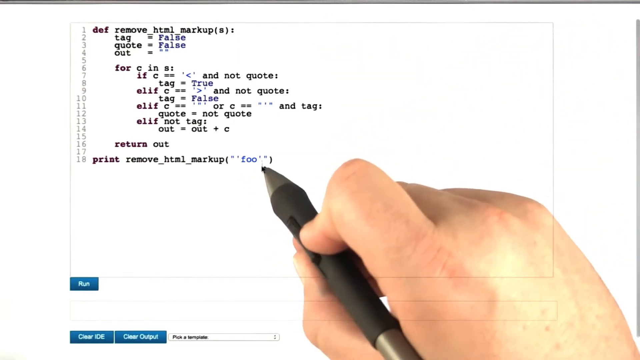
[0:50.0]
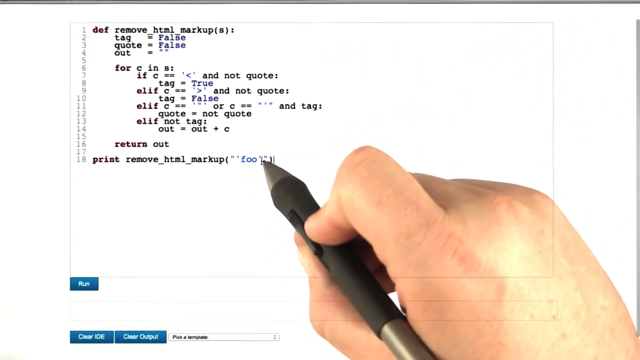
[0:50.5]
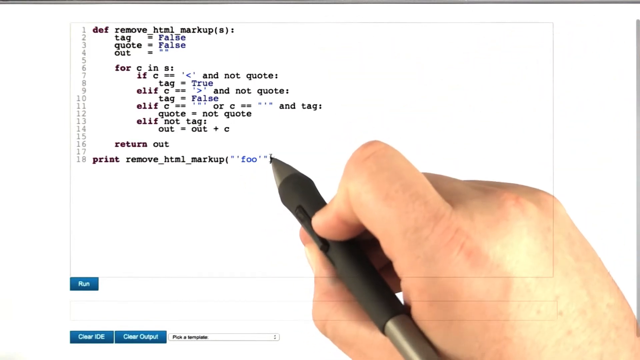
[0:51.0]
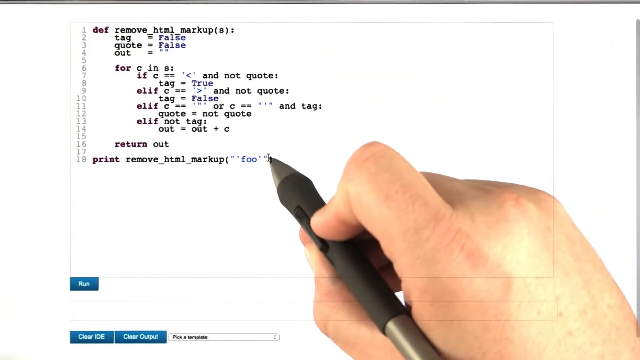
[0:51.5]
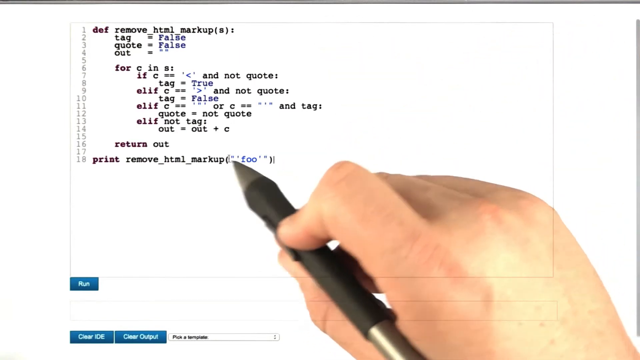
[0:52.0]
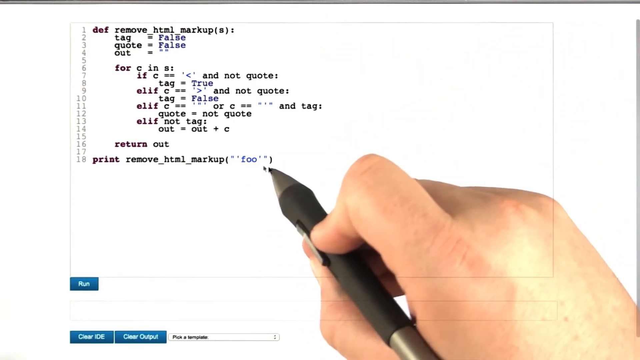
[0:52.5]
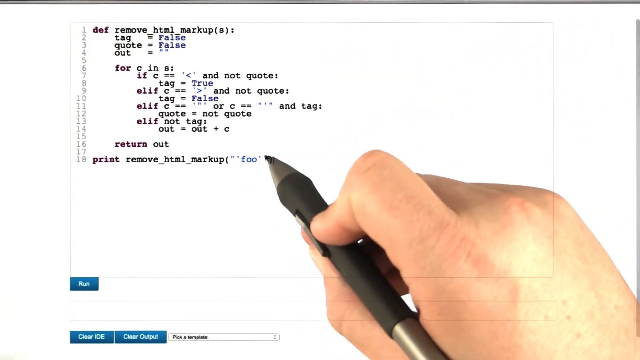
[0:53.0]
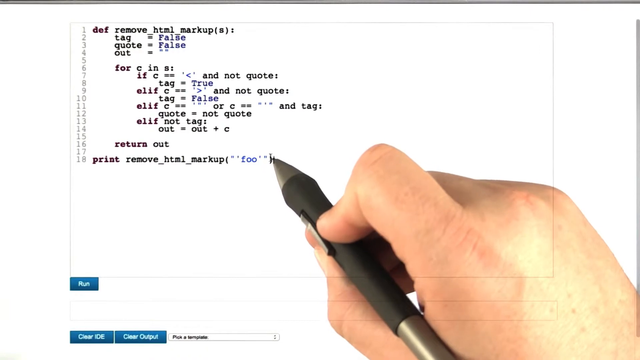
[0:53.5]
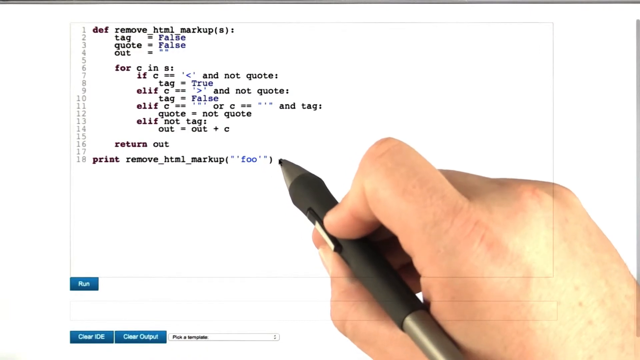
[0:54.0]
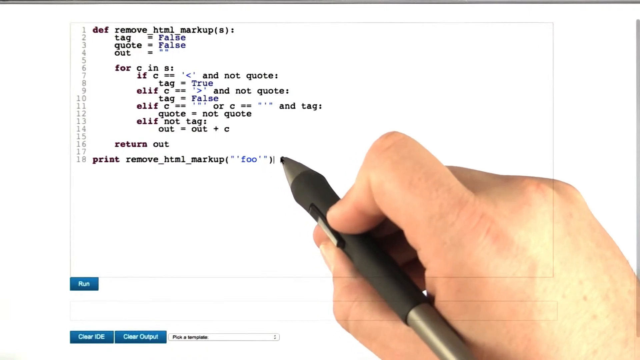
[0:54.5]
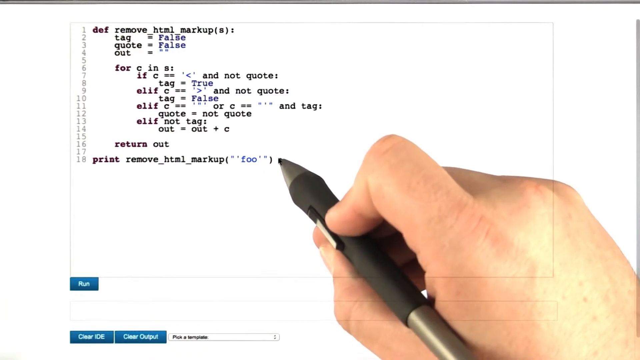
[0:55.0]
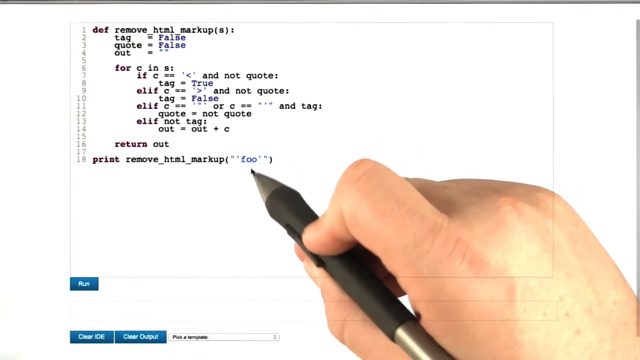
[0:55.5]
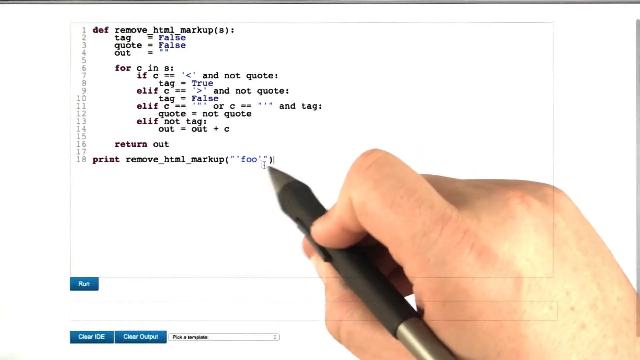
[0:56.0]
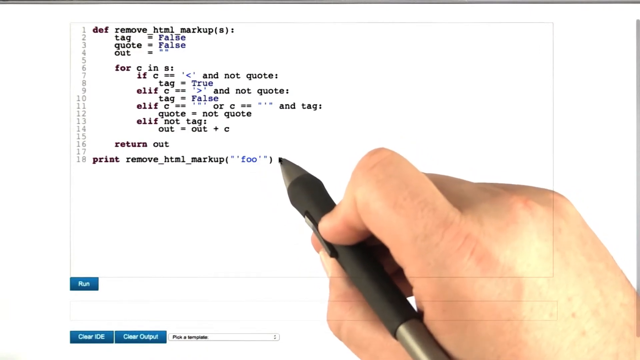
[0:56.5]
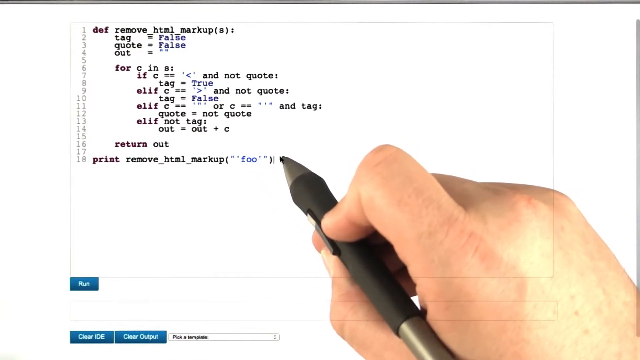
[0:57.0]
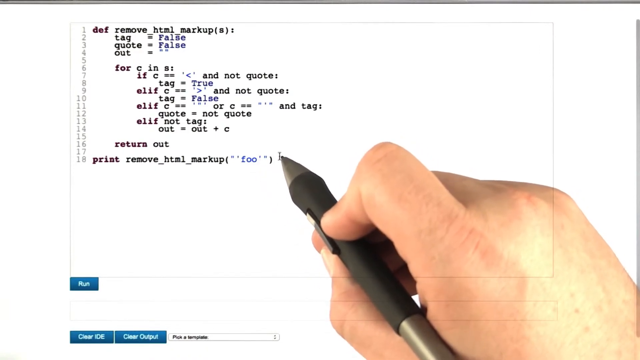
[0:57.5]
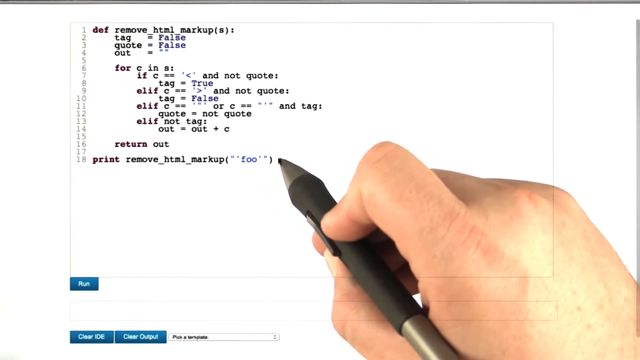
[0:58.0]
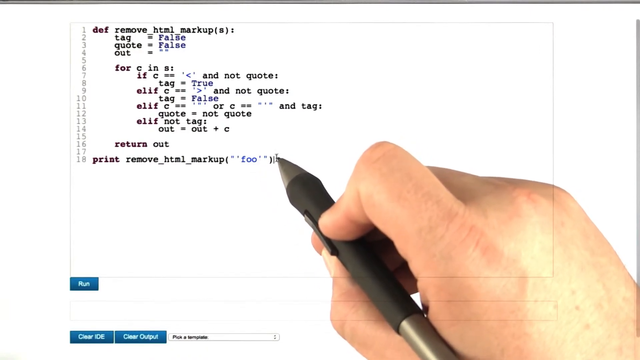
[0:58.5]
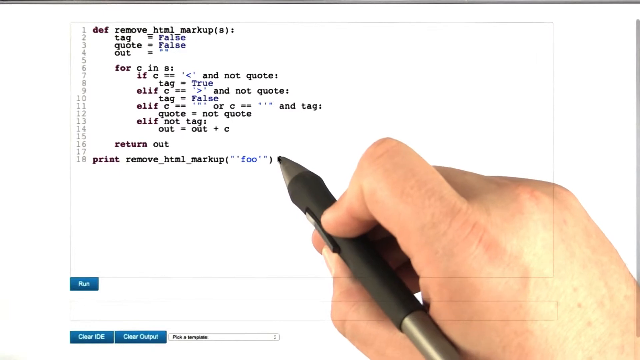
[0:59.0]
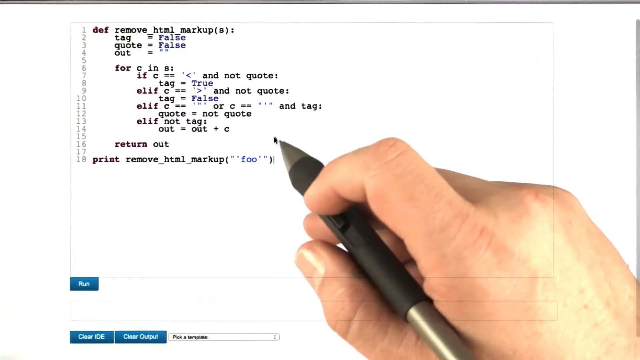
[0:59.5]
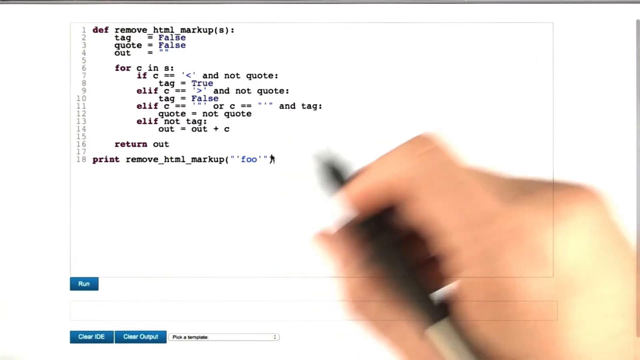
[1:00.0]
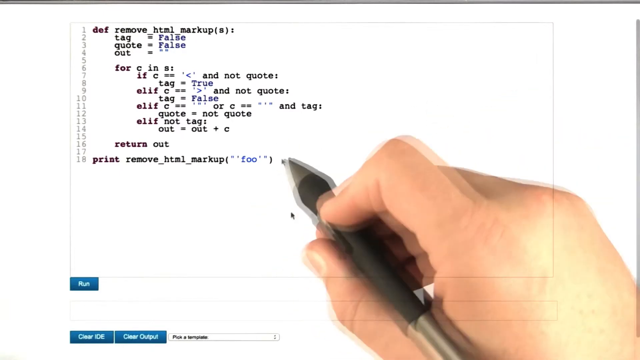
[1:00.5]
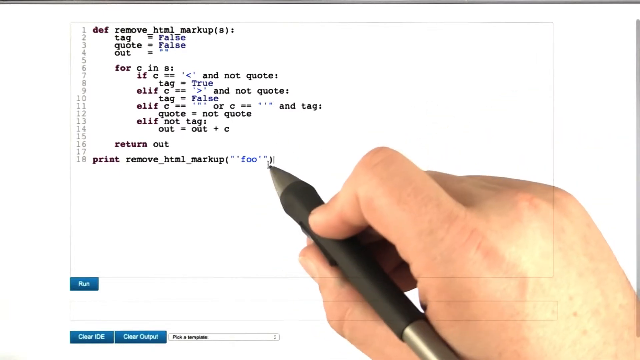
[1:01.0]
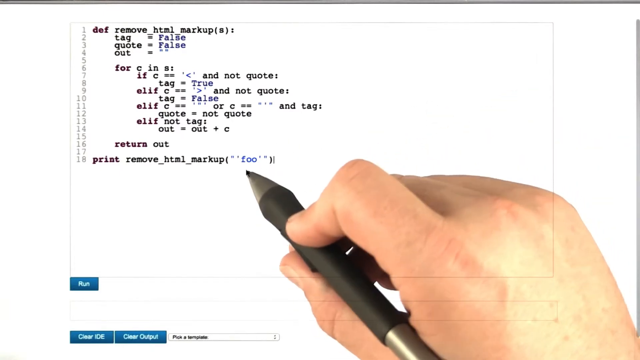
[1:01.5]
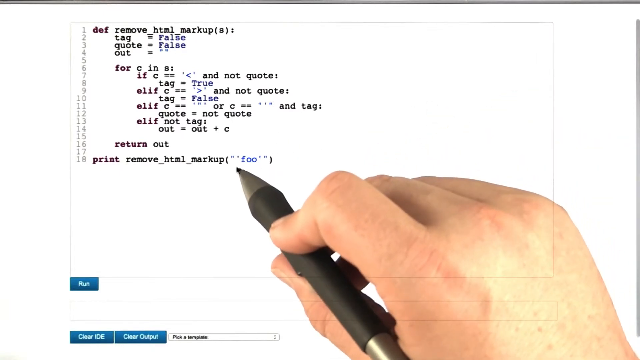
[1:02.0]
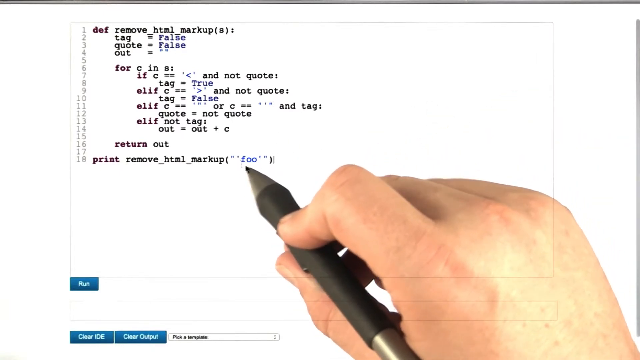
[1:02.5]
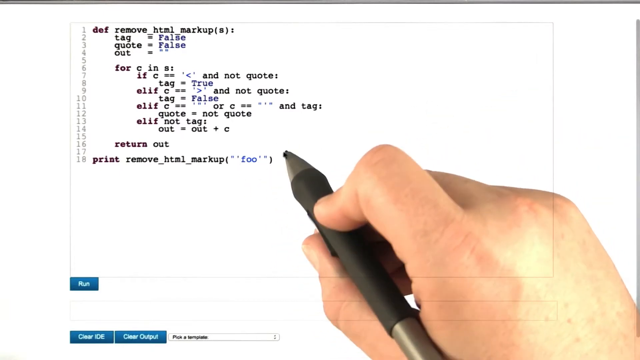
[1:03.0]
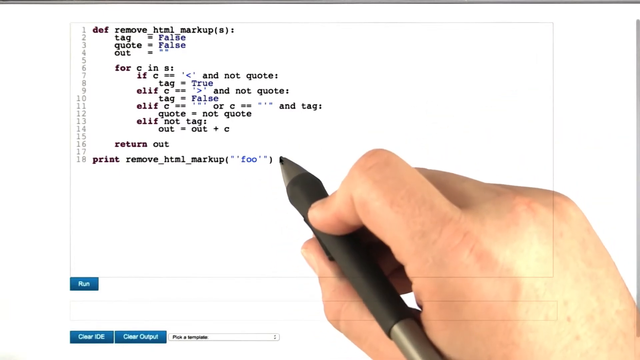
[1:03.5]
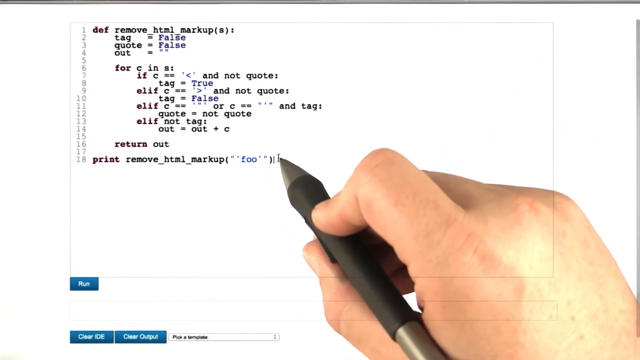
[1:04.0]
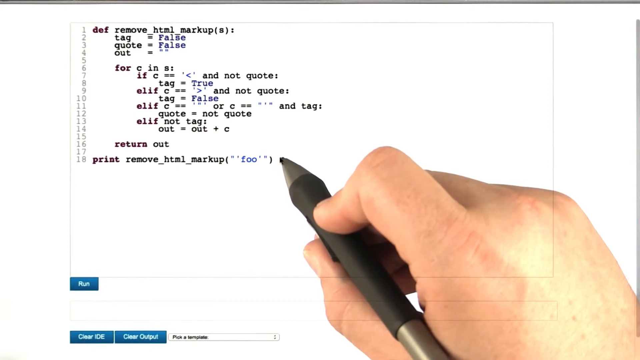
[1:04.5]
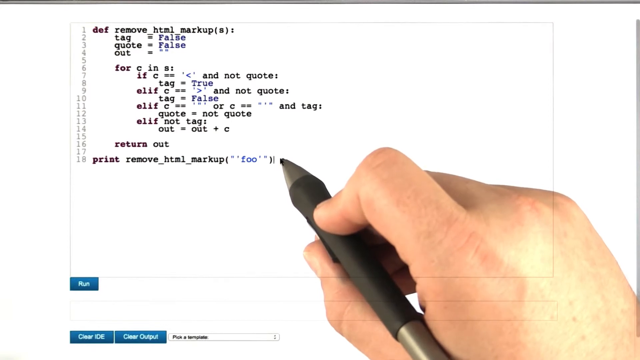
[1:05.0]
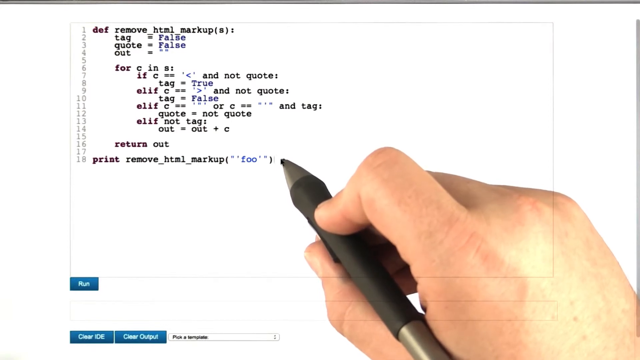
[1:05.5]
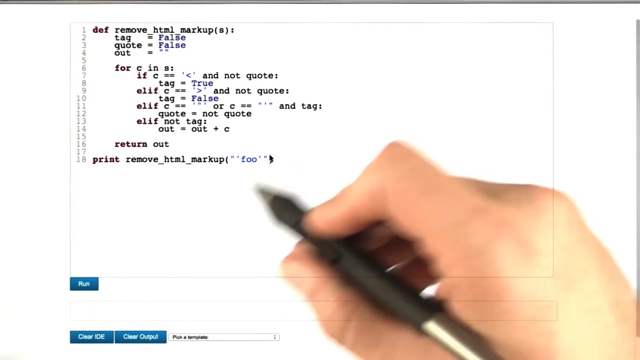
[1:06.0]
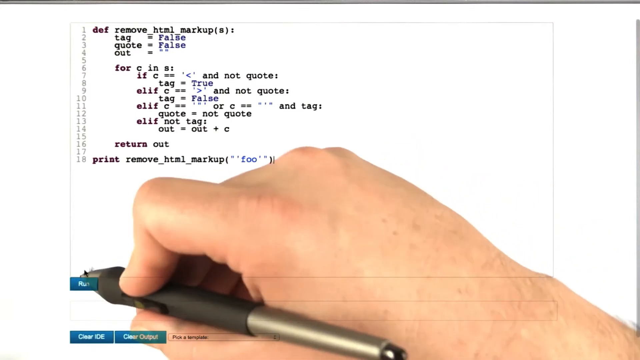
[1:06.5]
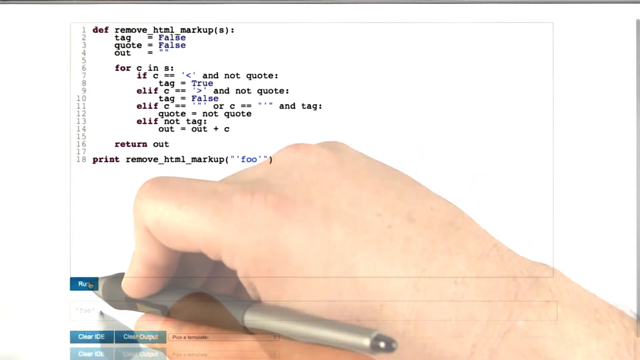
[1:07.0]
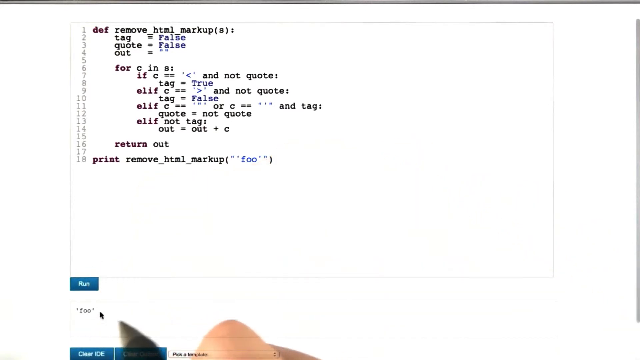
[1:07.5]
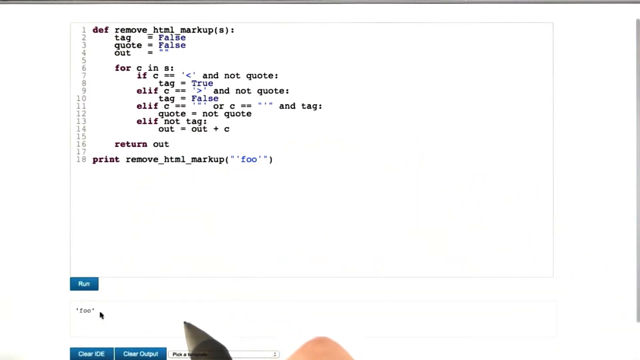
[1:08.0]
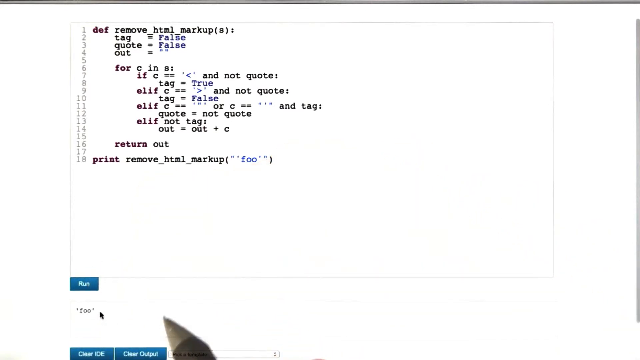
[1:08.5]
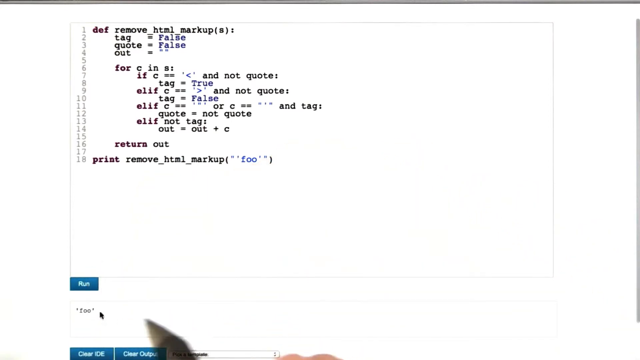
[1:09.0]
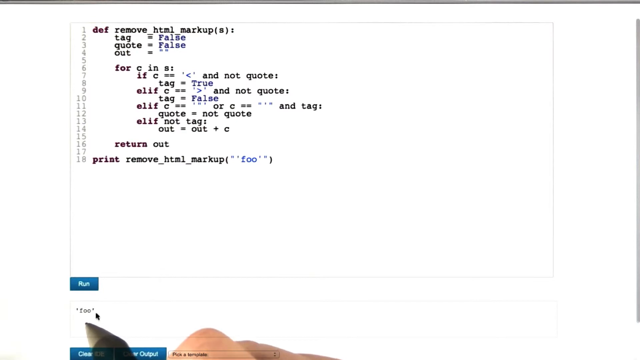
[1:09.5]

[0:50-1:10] The hand keeps writing. There is not much information on the board in this part.